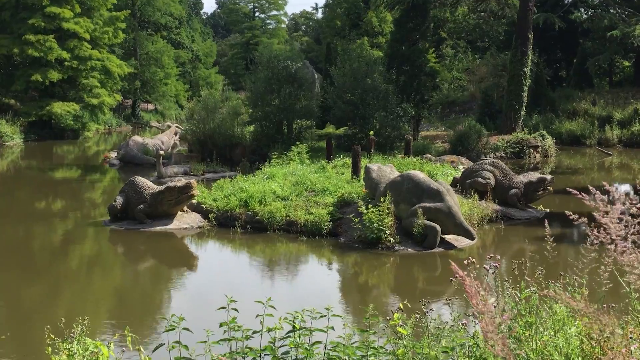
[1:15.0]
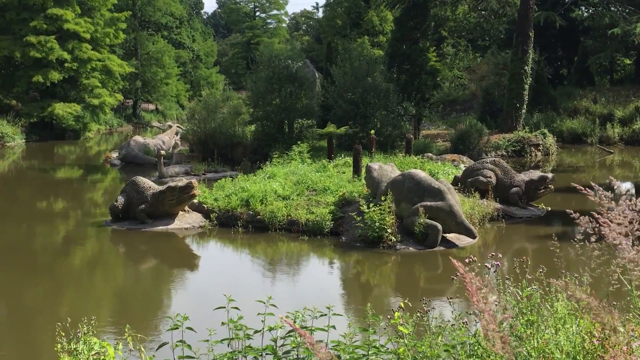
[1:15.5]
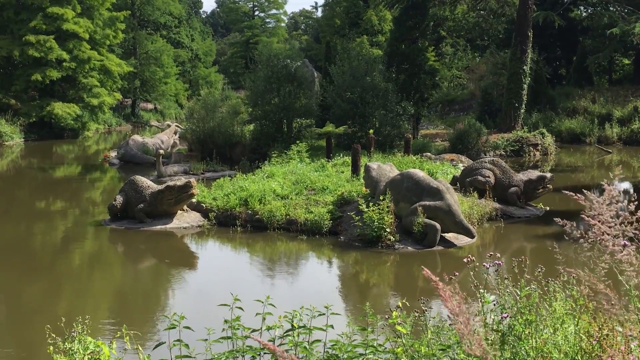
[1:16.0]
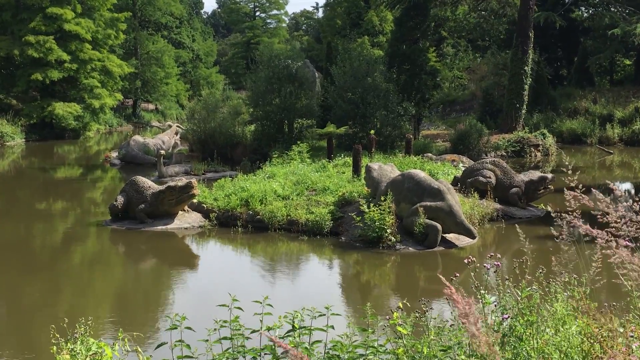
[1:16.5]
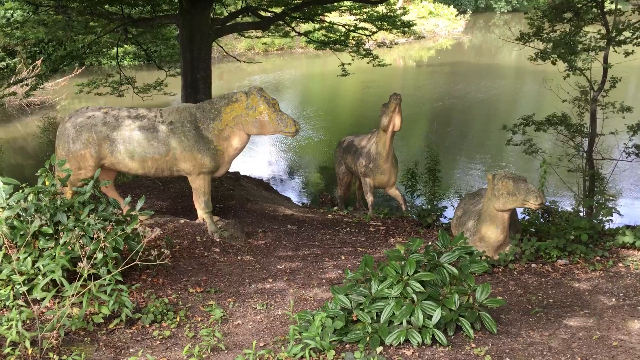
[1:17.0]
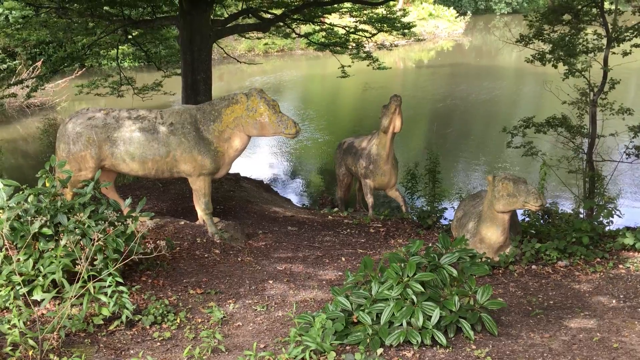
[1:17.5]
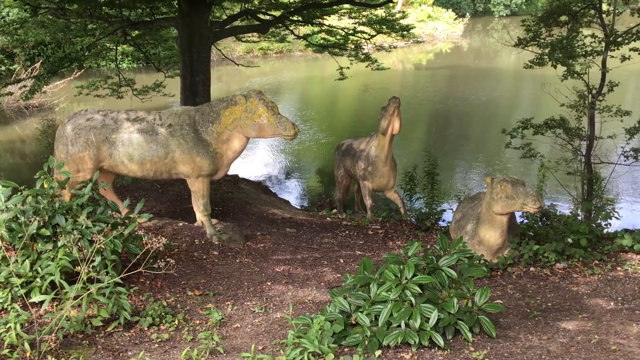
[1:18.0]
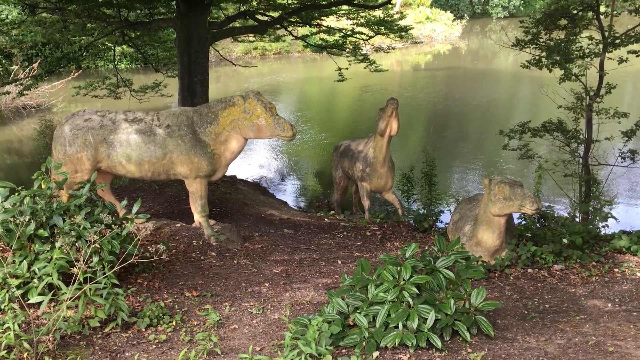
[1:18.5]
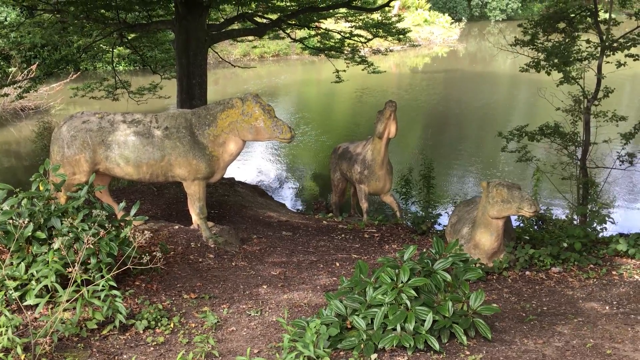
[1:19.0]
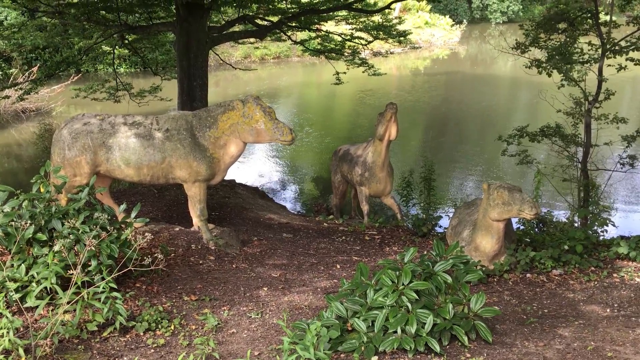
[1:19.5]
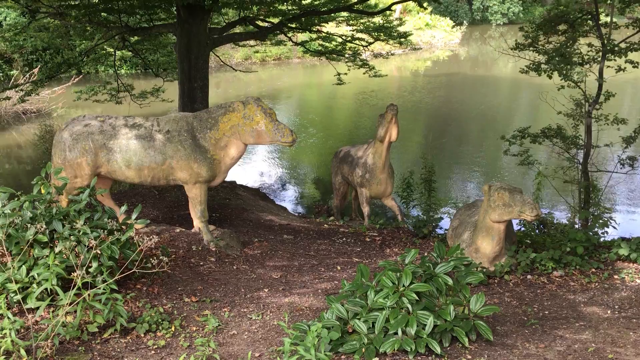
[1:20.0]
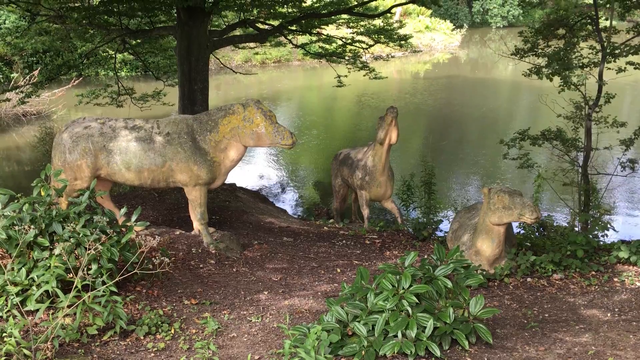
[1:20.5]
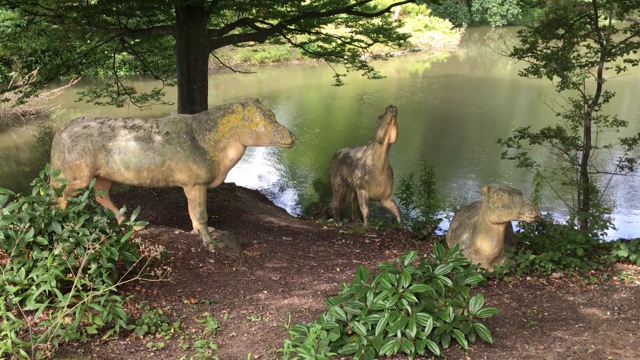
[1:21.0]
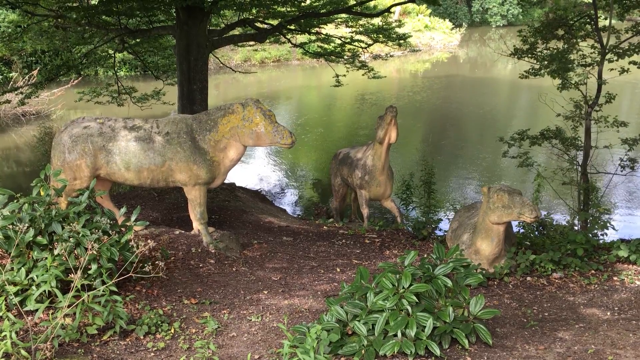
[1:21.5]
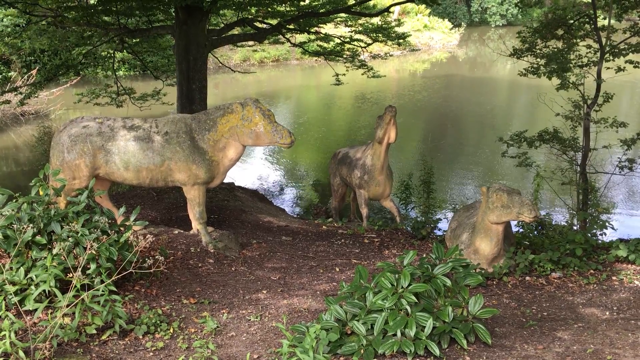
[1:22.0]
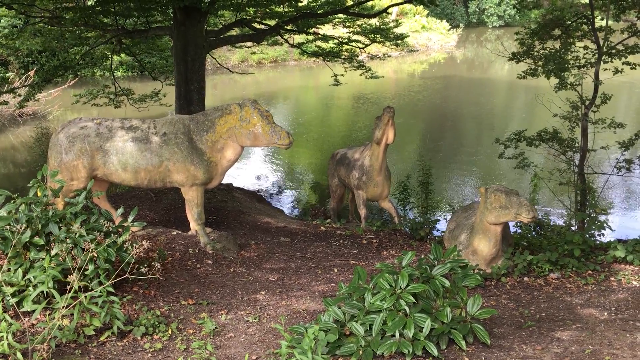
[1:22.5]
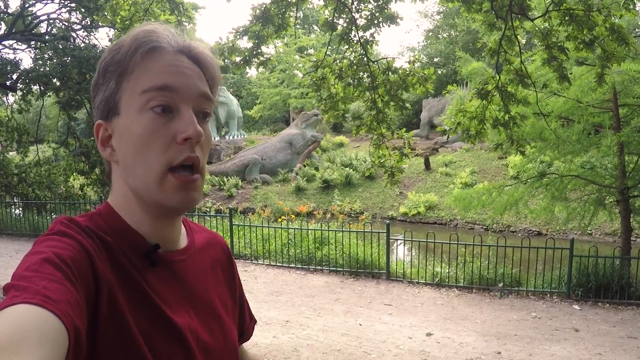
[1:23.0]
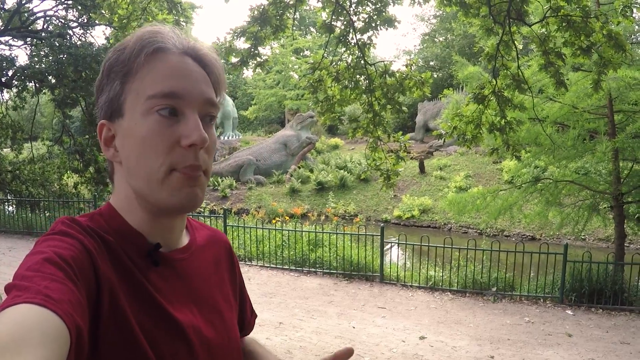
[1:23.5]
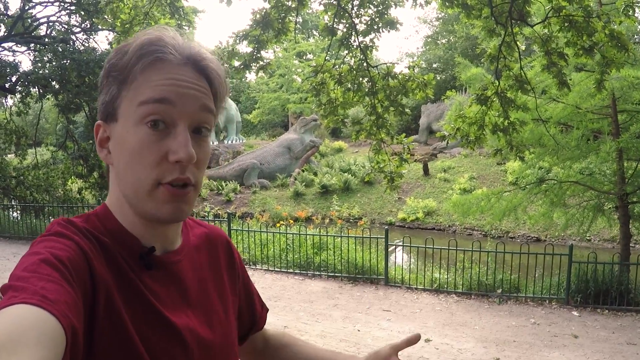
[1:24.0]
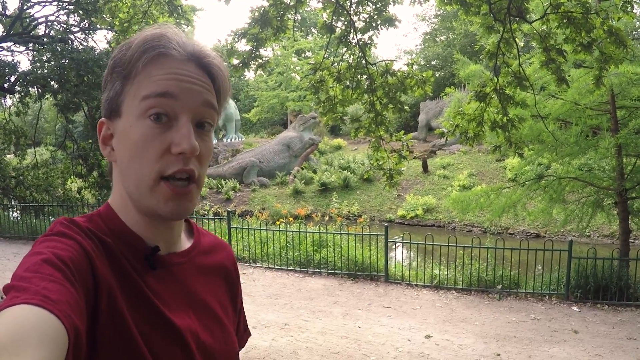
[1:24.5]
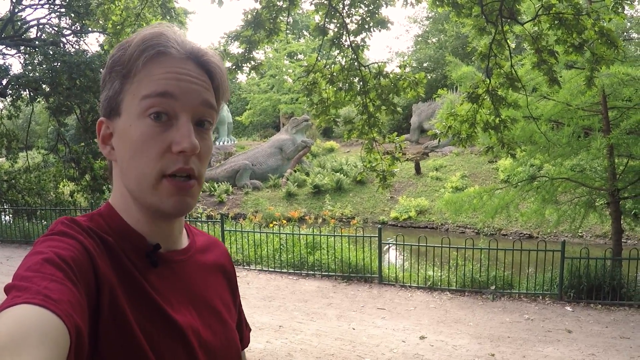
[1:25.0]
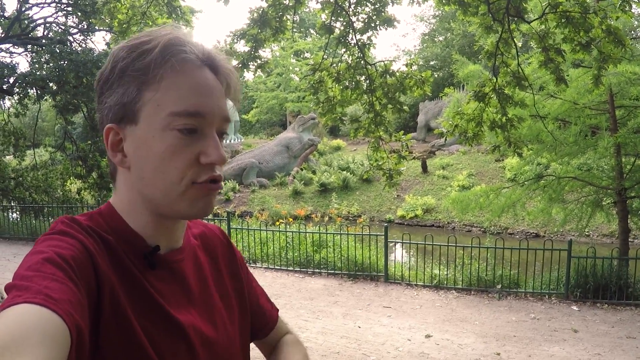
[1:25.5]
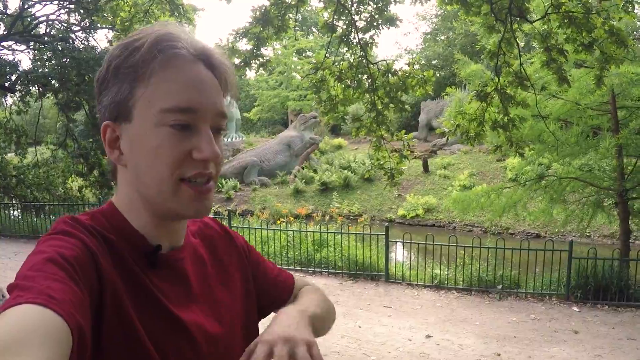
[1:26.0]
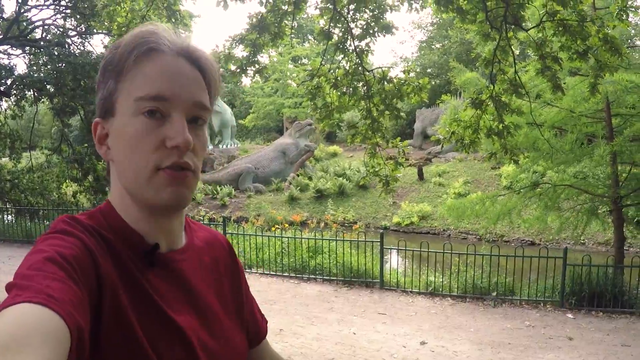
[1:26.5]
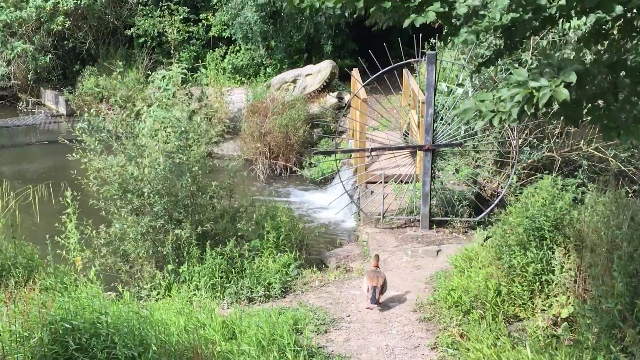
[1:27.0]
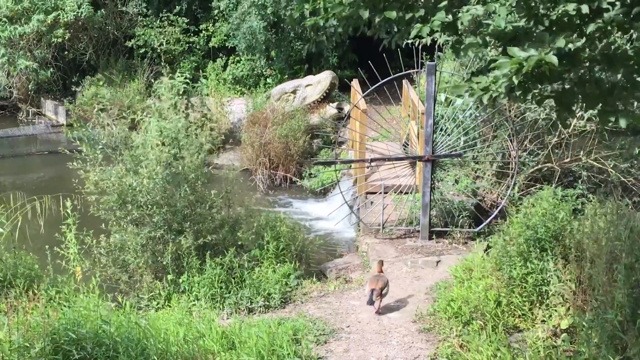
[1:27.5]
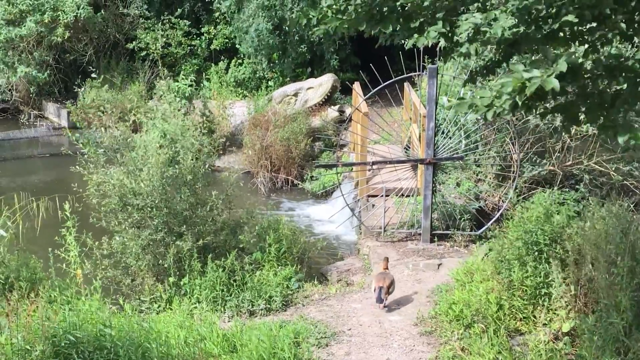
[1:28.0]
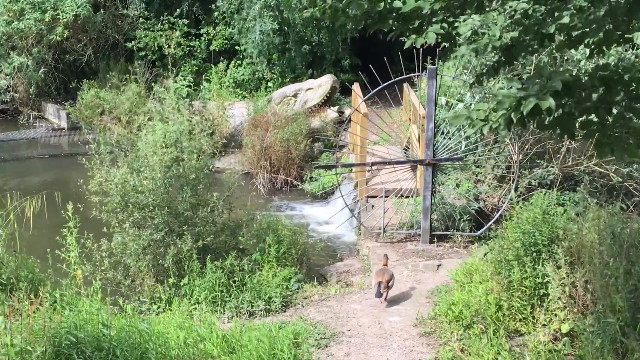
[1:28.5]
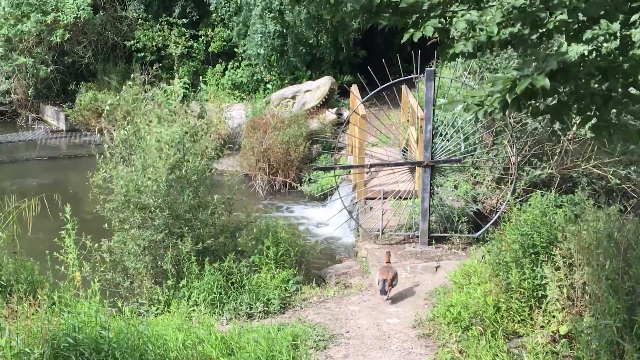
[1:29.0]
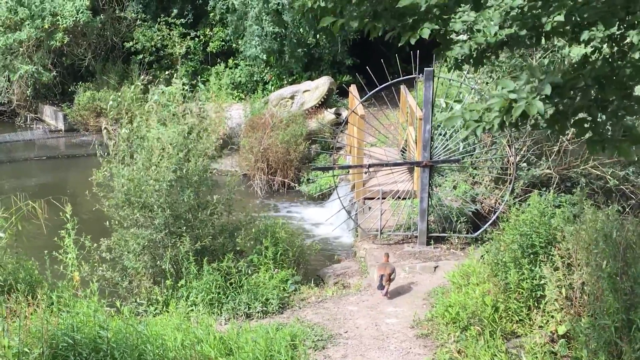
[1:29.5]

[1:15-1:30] A close-up shows a display of dinosaur statues in a lagoon, with a small grass-covered island in the center and the dinosaur statues arranged around it. The video switches to a different display showing statues of animals that almost look like horses, standing next to a body of water. They are surrounded by trees and stand on paths with no grass, with grass surrounding the paths. The scene switches back to the presenter, a young man in a short-sleeved red t-shirt with short brownish hair, who gestures and looks at the camera he appears to be holding in one hand while gesturing with the other. Then another scene within the park shows some type of bird walking down a path toward a dinosaur statue on display that is surrounded by bushes and foliage, with a fan gate between the bird and the display it is walking toward.